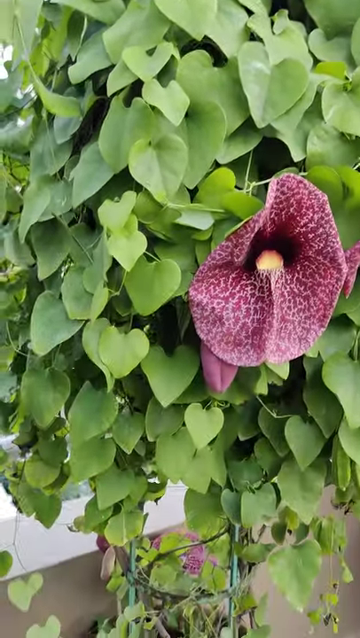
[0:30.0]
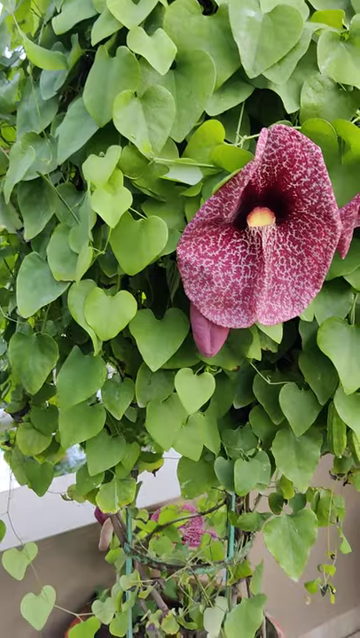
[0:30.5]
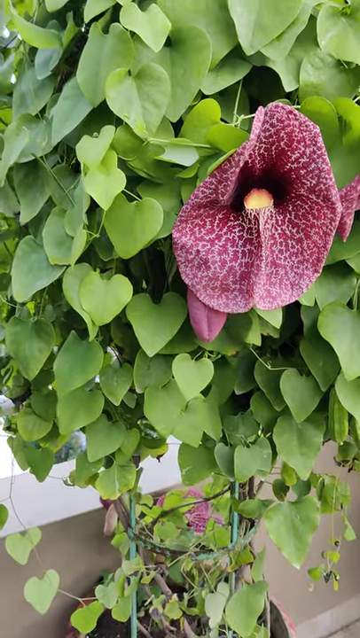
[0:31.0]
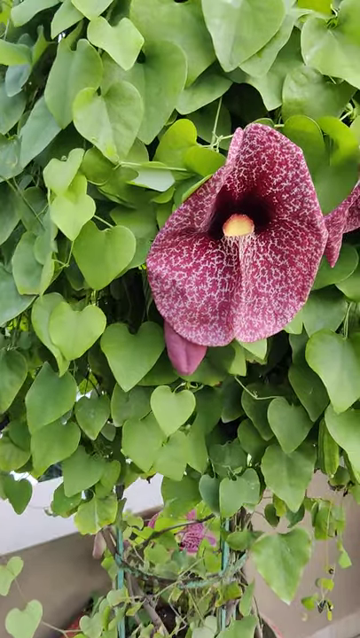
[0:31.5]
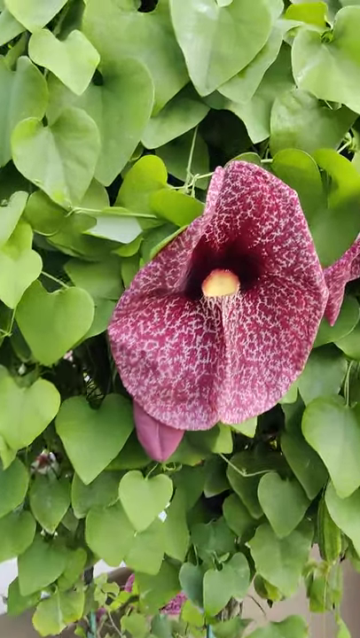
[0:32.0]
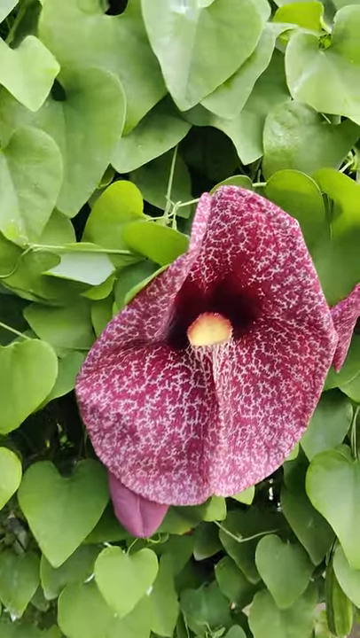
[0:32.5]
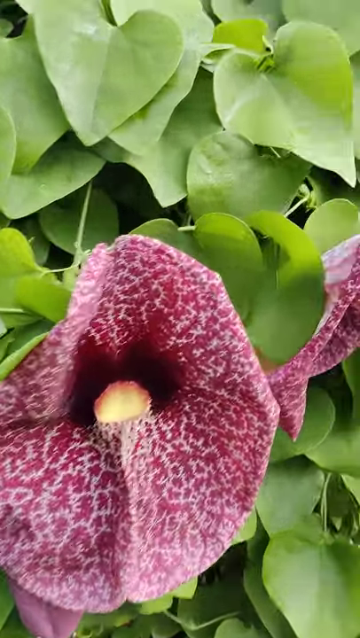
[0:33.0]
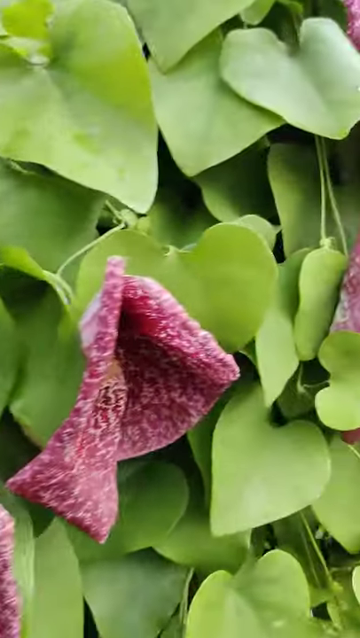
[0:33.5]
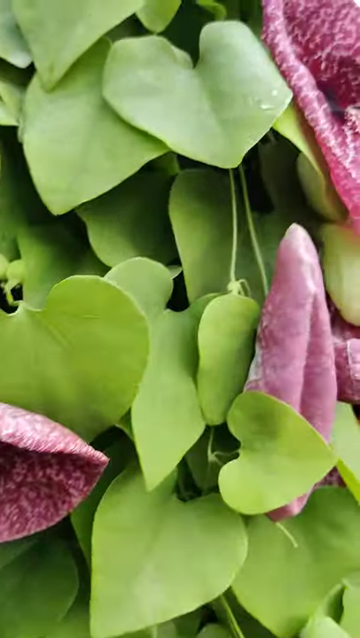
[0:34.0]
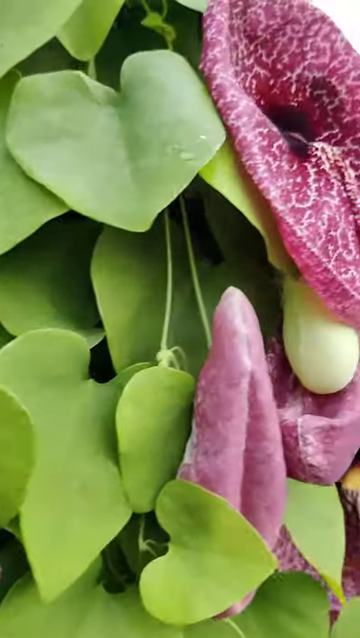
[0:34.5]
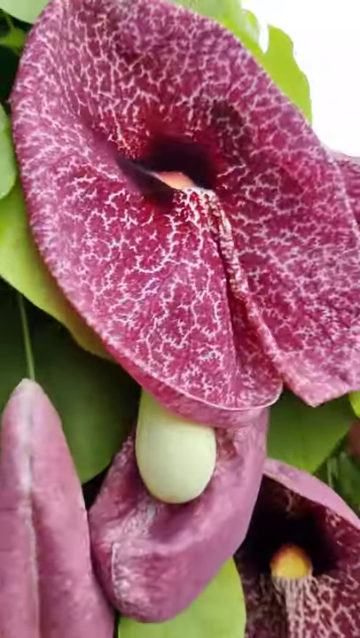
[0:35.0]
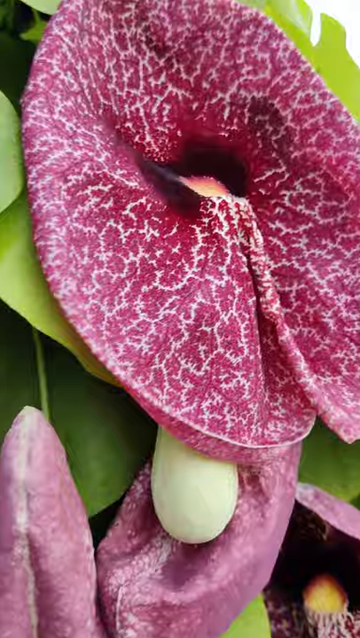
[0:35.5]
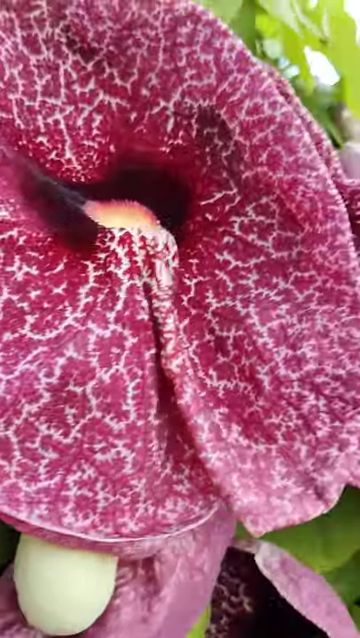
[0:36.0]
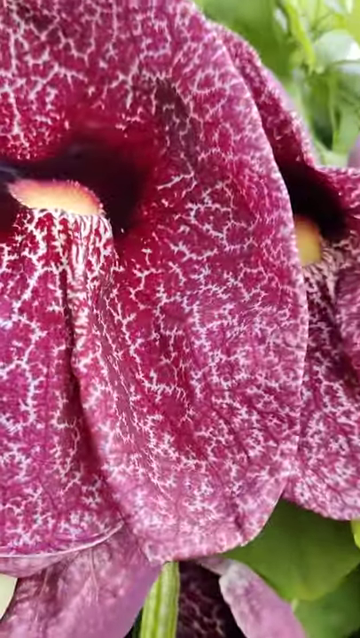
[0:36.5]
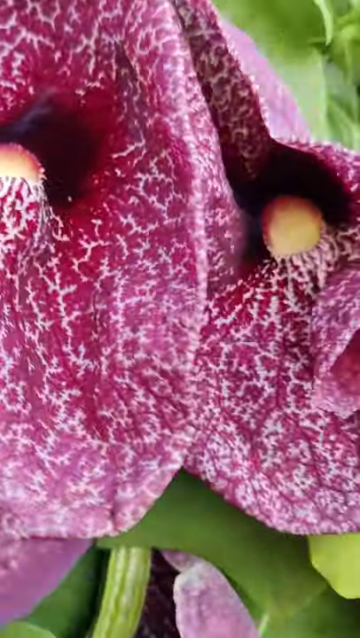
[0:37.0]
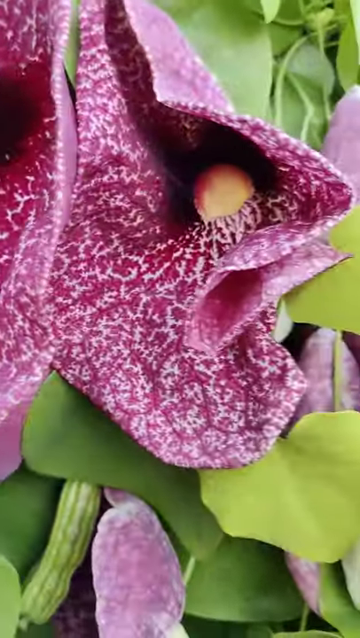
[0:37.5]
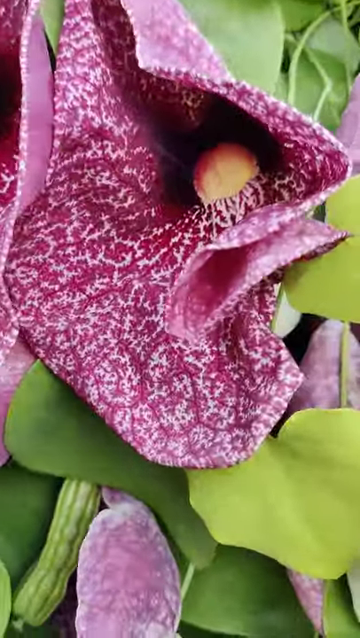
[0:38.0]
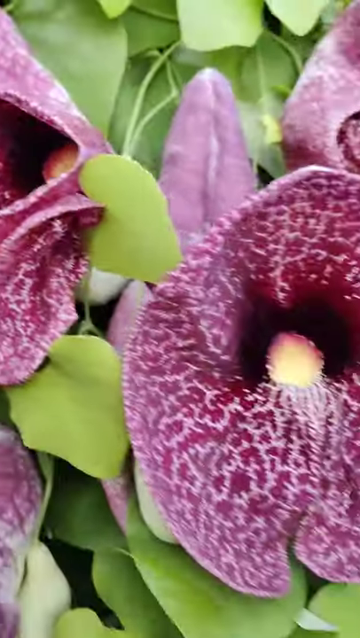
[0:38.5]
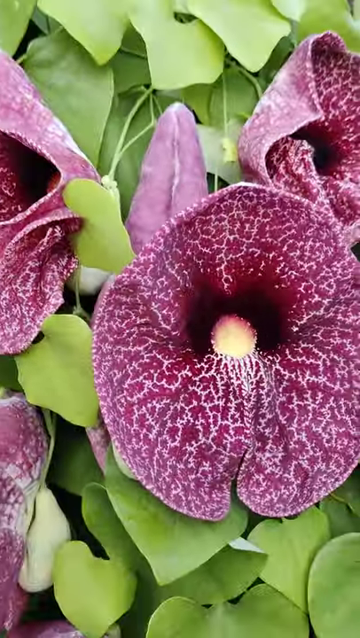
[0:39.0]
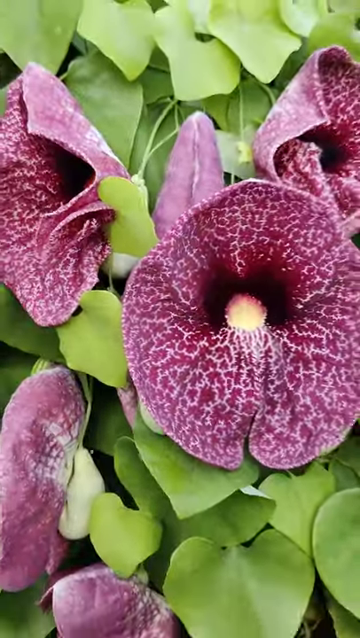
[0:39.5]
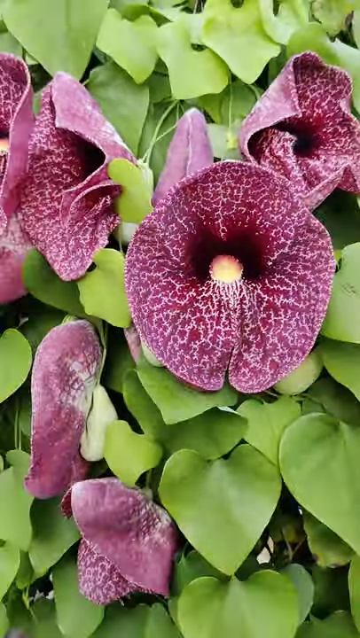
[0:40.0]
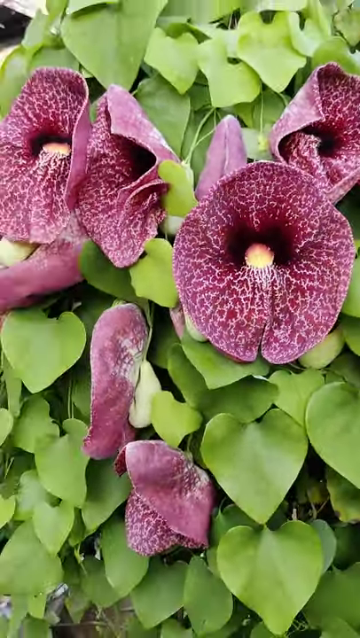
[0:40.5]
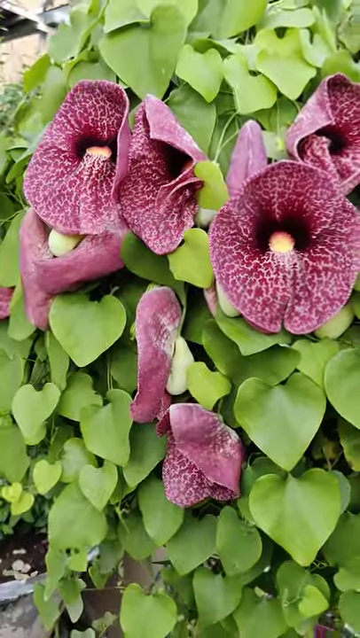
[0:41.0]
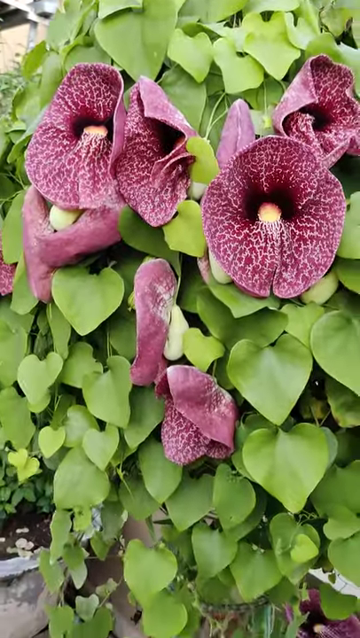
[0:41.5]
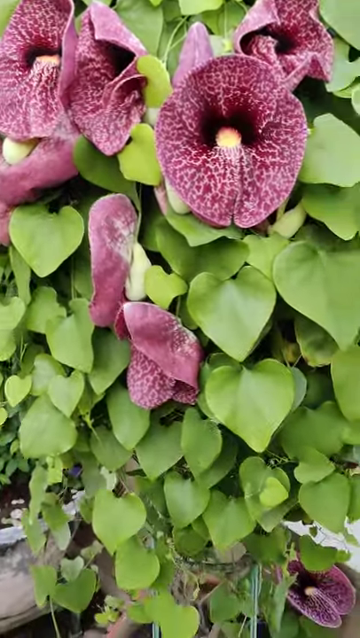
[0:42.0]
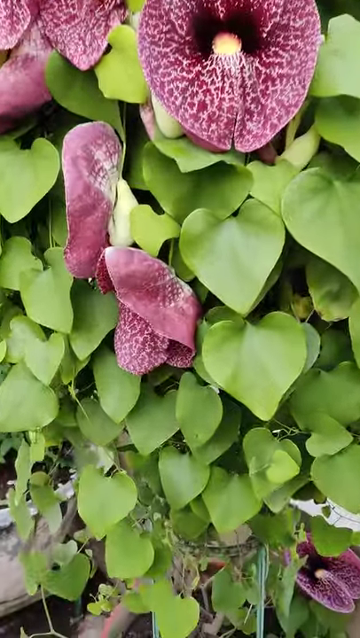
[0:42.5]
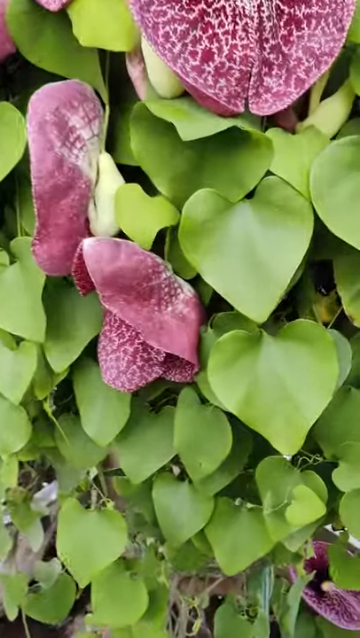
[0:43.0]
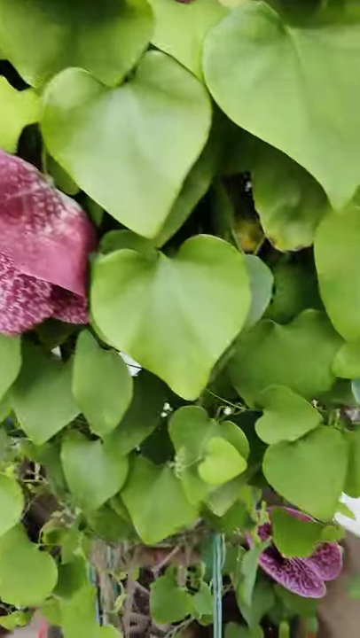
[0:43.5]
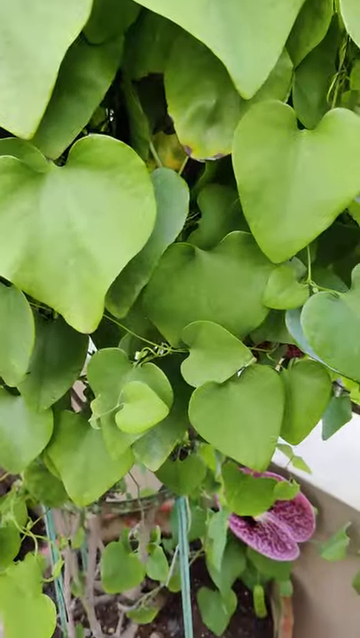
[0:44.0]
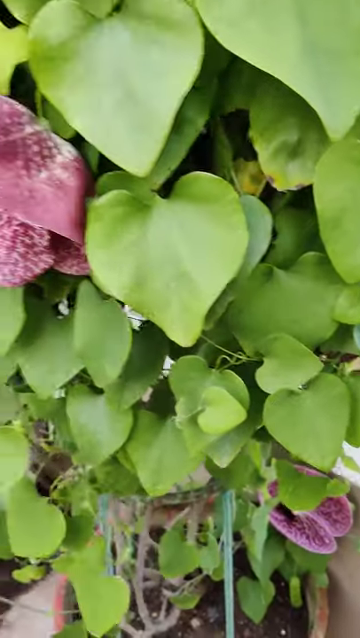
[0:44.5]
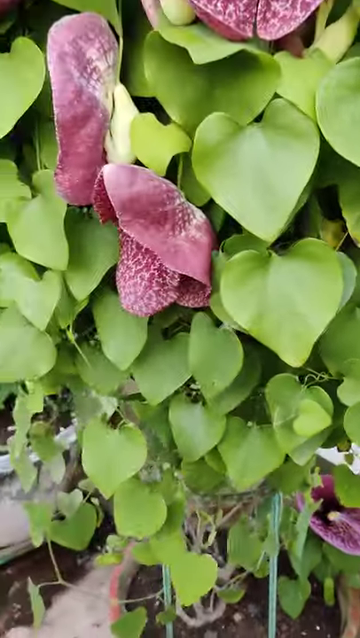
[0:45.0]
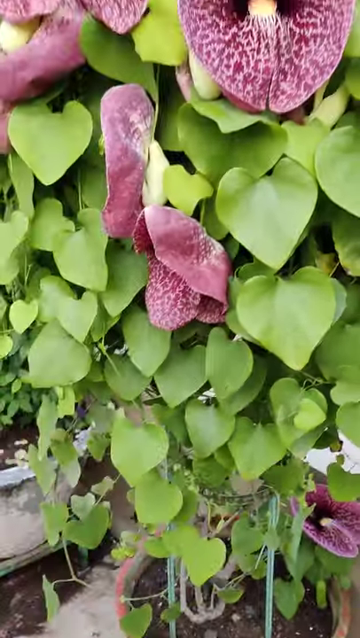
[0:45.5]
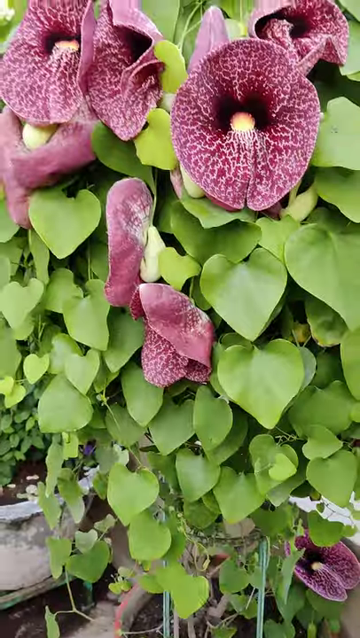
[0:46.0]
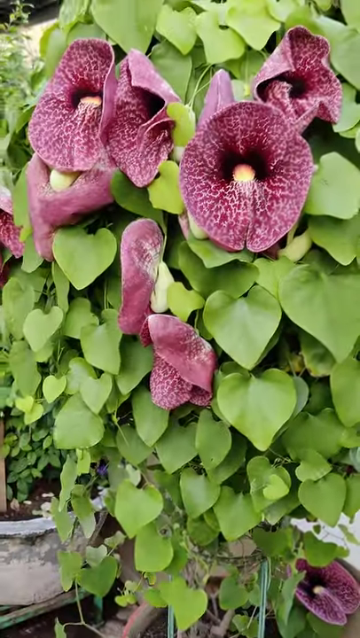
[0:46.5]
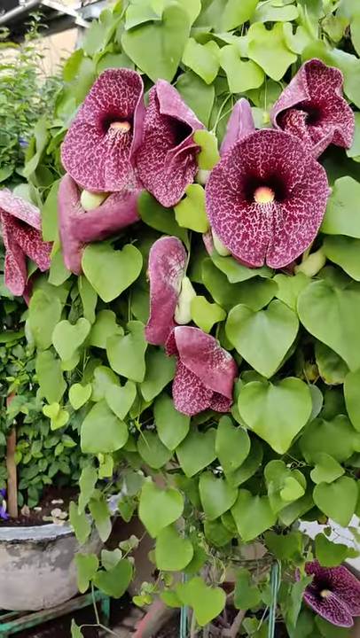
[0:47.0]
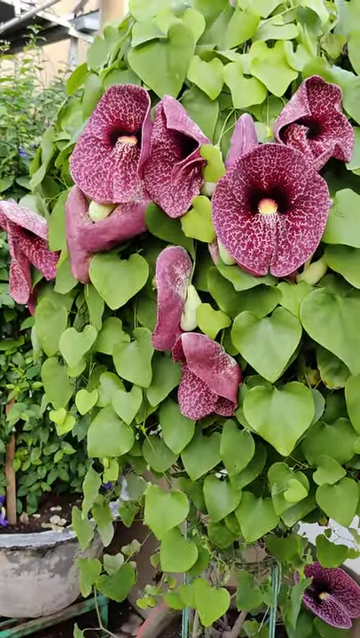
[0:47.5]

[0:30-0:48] The view stays on the leafy green plant with giant reddish-white leaves and some type of cucumber-looking thing growing behind it; one of them looks like a thin watermelon. There is a lot more green as the camera pans. The plants are growing in planter pots: one planter is white and another is a typical reddish planter, probably made of a concrete type of material. Part of one of the leaves behind it almost looks like a pink tongue, and a bulb of some type behind it looks like a radish. In the middle of the flower is an orange, slightly red color.